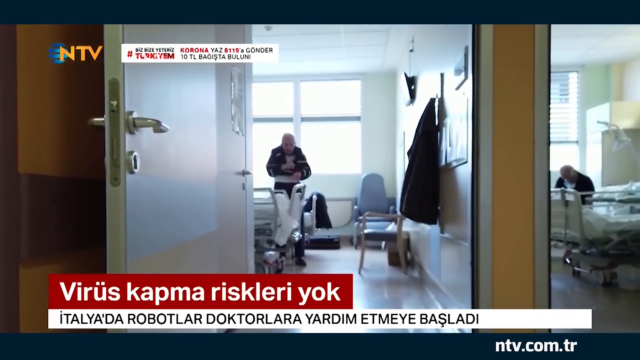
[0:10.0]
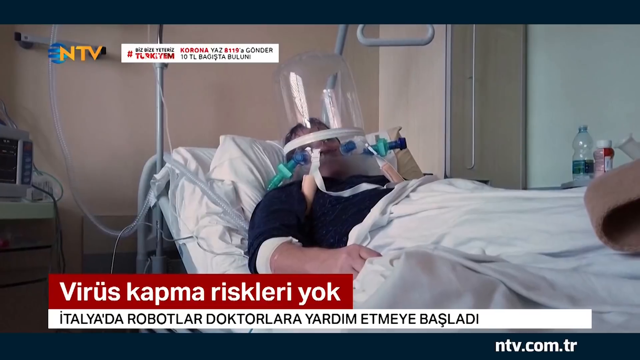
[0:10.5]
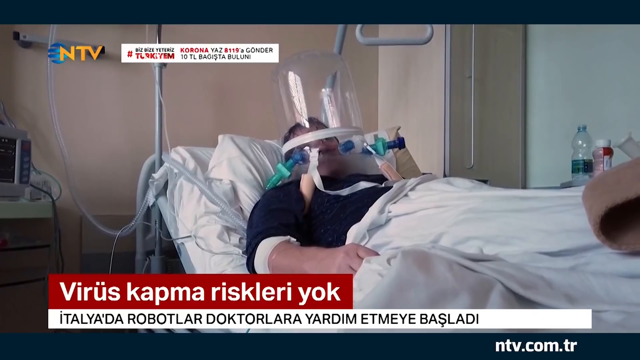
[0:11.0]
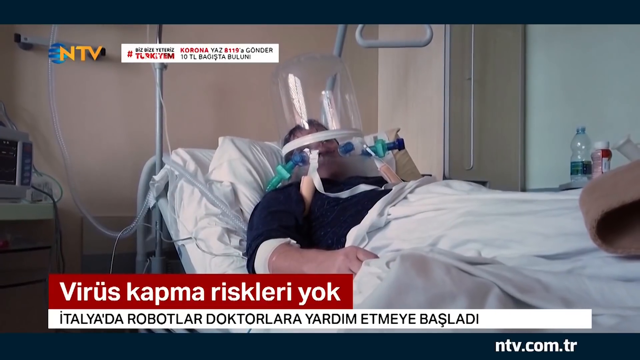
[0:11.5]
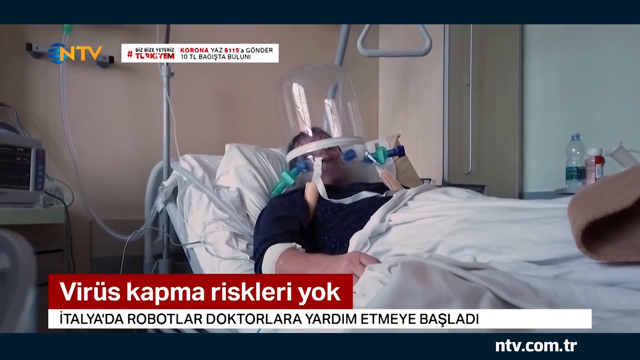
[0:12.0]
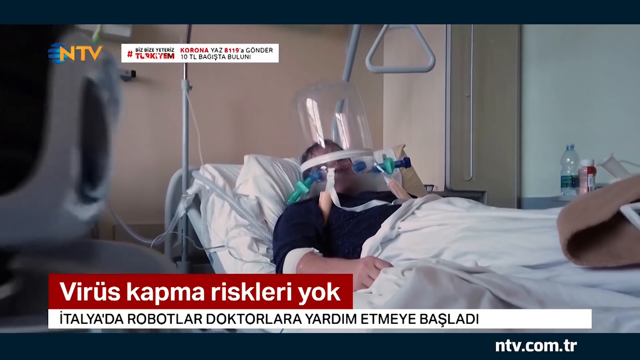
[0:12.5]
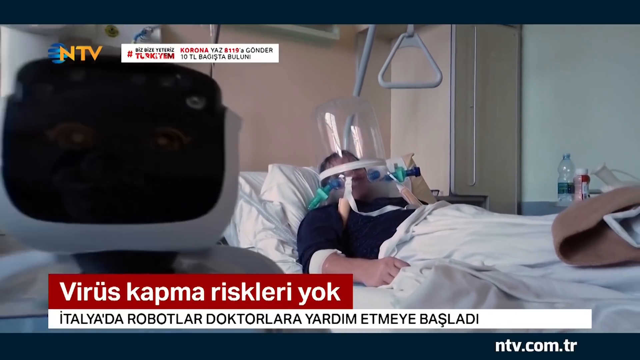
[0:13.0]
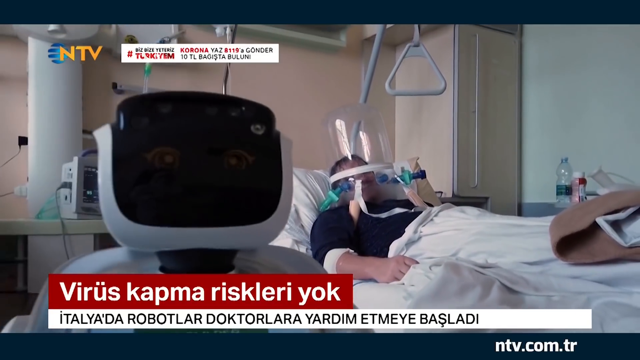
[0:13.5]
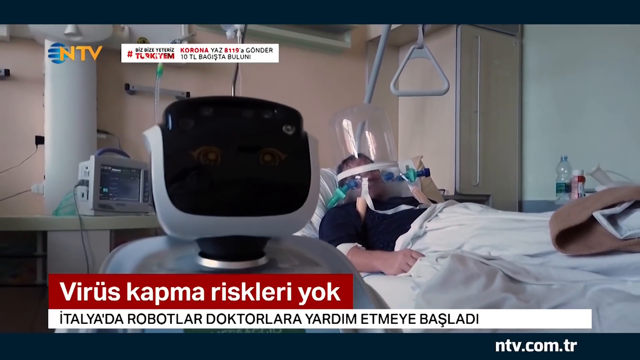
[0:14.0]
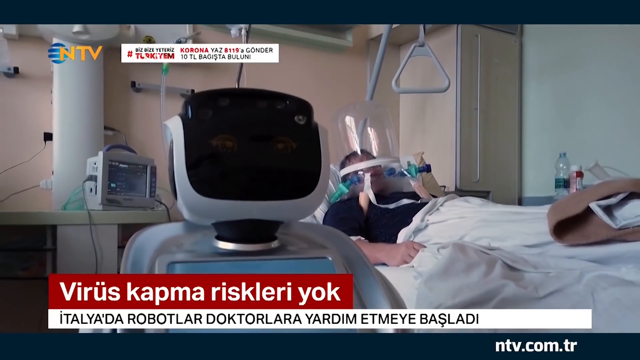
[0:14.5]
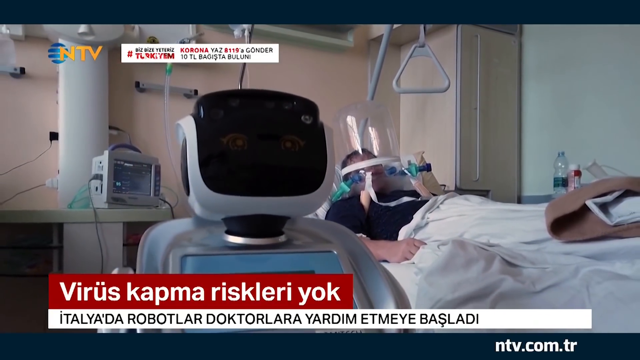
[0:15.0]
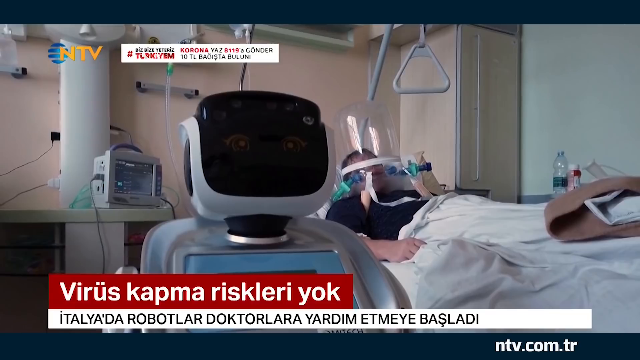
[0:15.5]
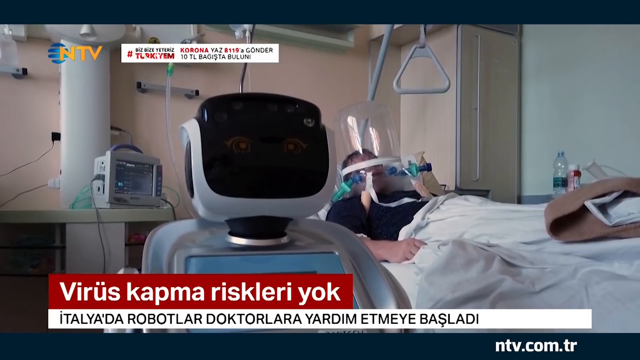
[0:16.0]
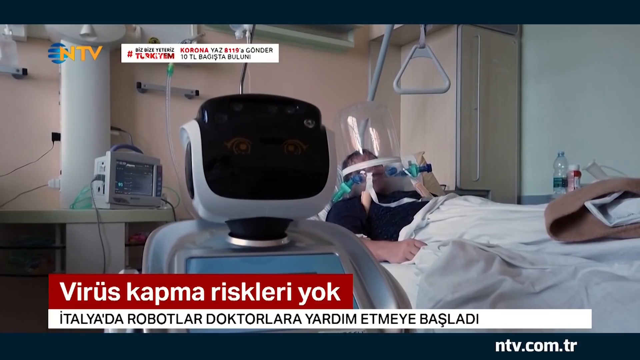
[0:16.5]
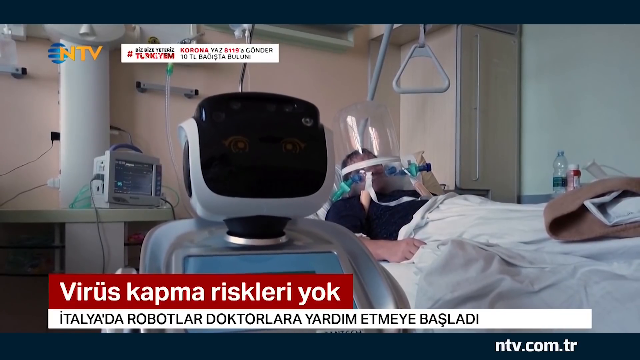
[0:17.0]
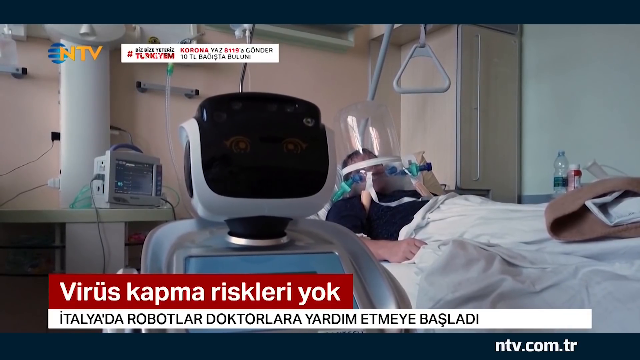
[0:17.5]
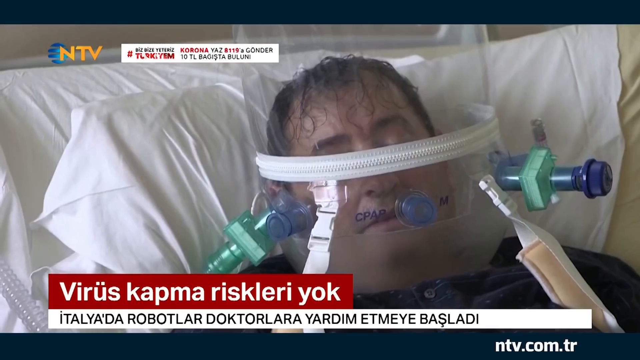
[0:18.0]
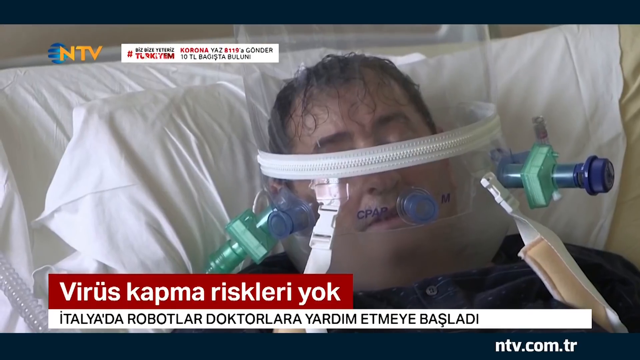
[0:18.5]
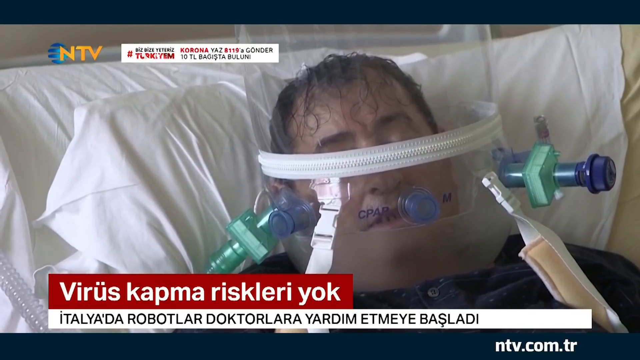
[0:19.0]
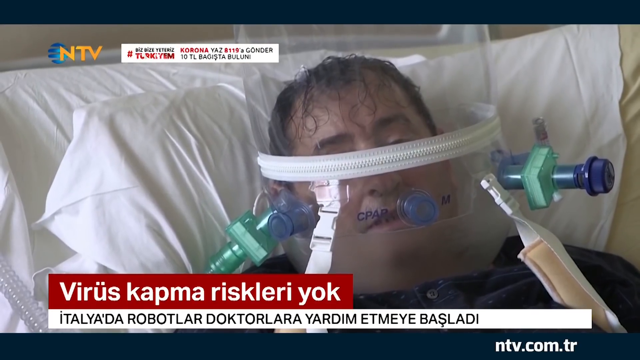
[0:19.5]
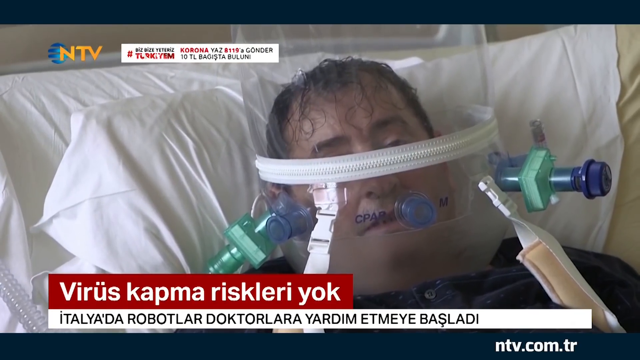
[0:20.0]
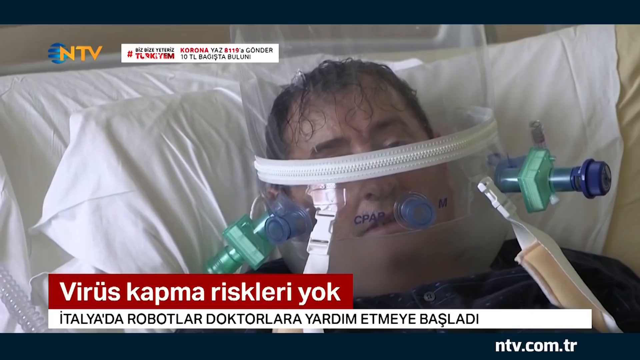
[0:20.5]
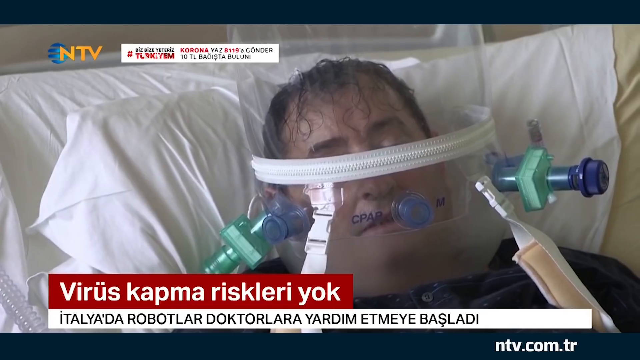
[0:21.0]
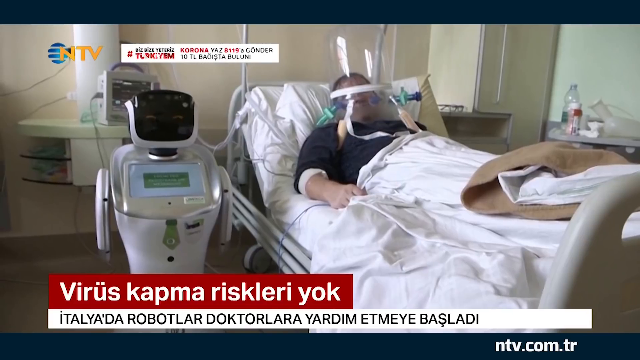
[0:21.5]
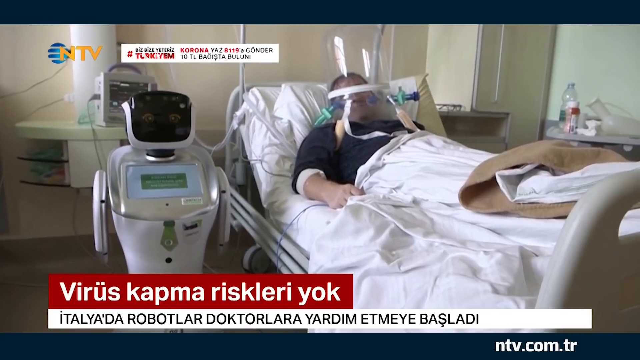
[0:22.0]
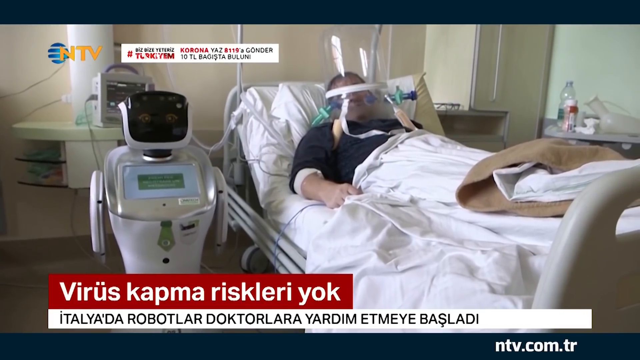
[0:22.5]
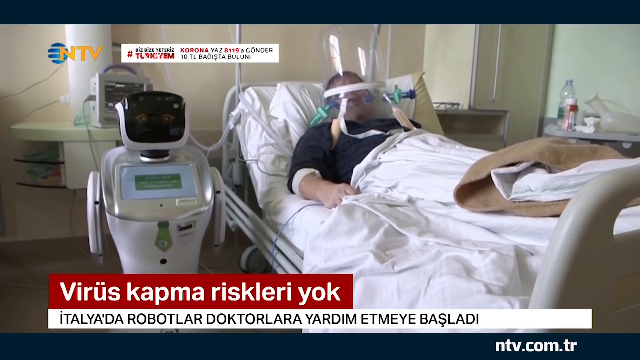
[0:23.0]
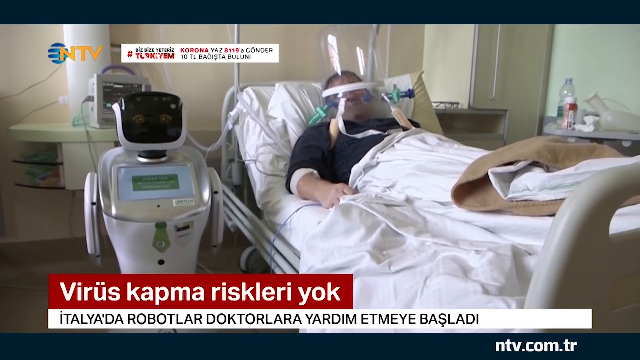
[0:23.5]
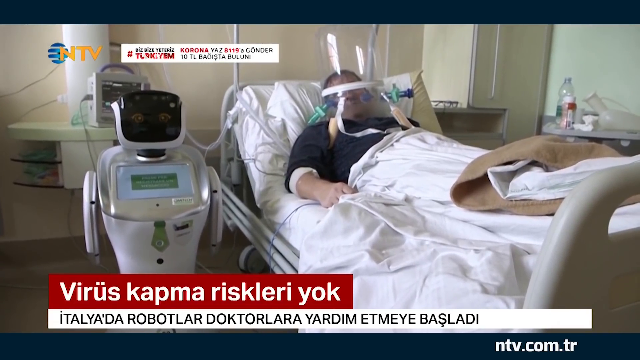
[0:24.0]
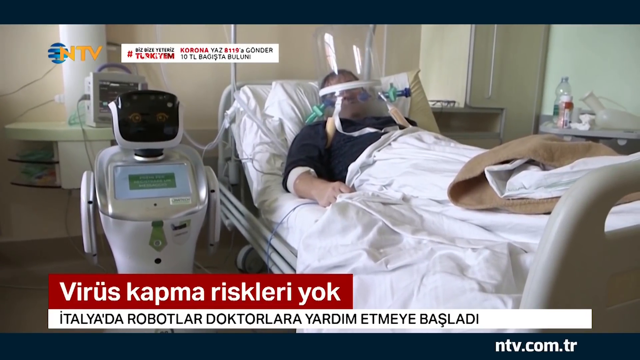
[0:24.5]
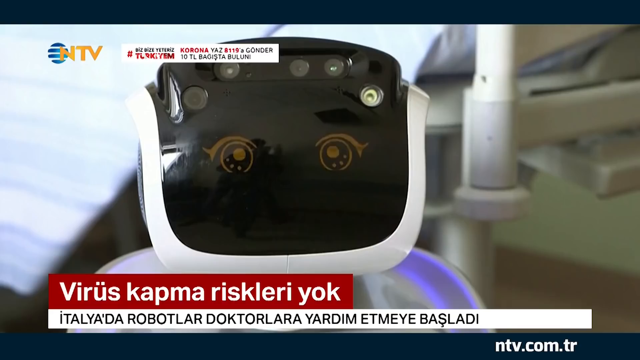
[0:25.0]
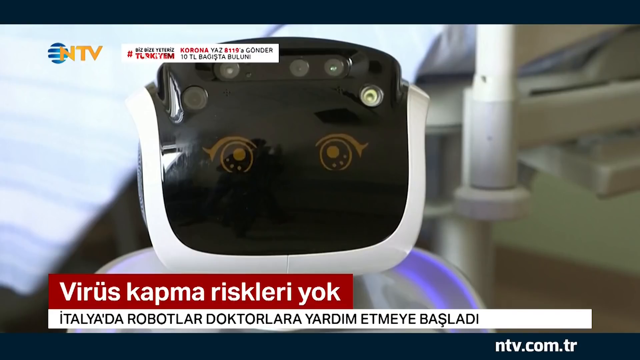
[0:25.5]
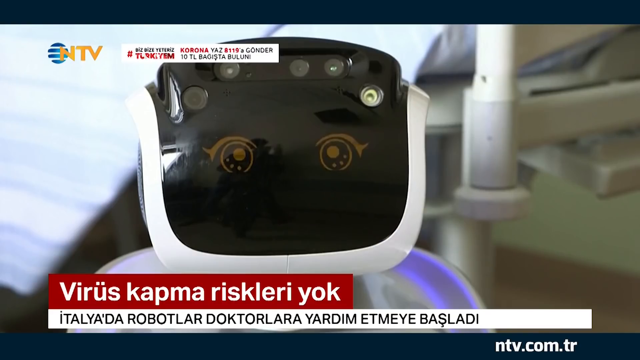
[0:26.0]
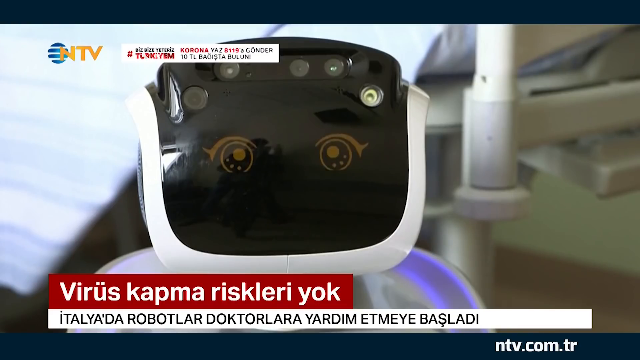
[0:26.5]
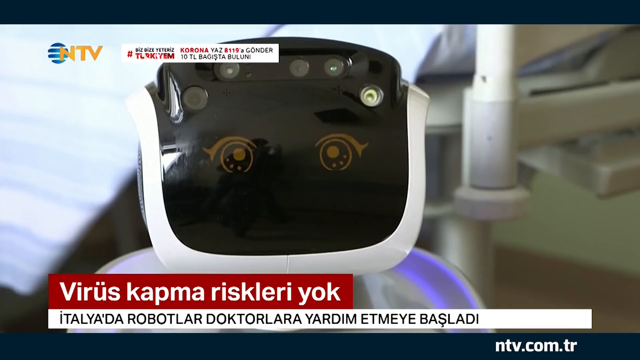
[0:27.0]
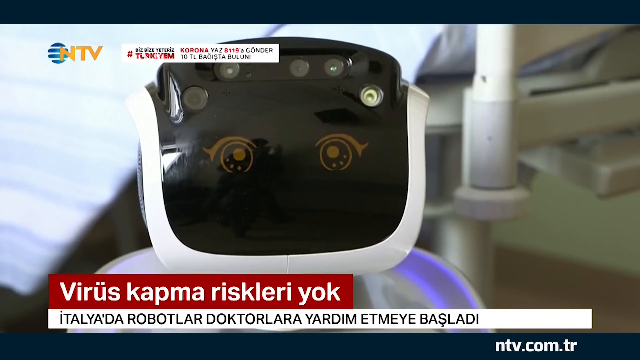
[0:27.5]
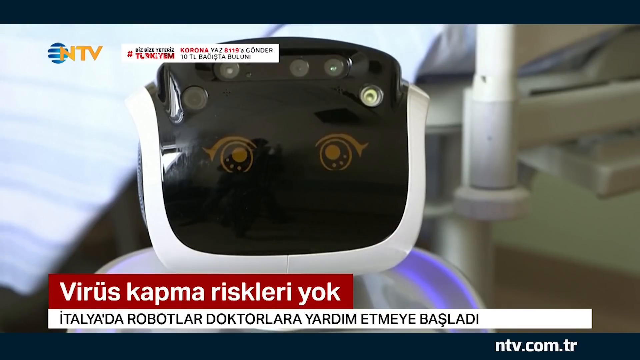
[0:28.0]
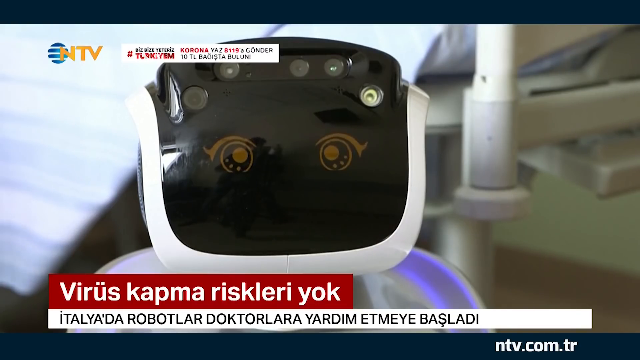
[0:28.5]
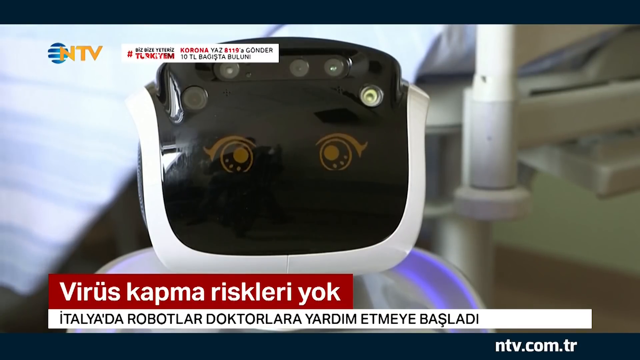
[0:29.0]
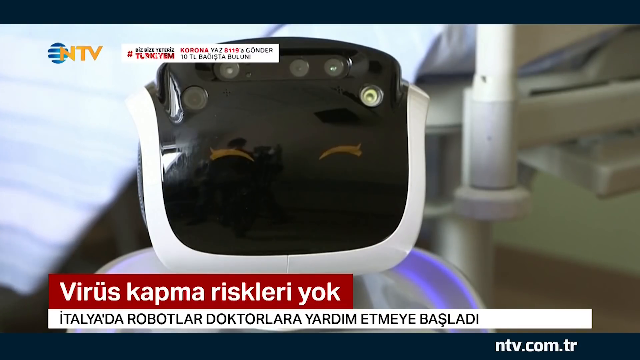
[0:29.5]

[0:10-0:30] The "MTV" sign is written in orange at the top left, followed by fine print next to it in black and red. What looks like a robot with a screen on it walks next to a human in a white outfit. They walk past a room with a person in it. At the bottom left is a heading in a language other than English, which is very difficult to read. A man in one of the rooms seems to be in very critical condition; he has a mask over his face to help him breathe and appears to be unconscious. No animals appear.